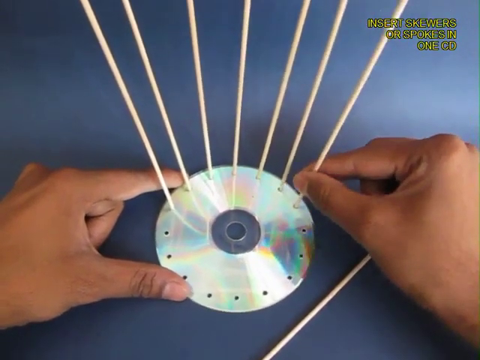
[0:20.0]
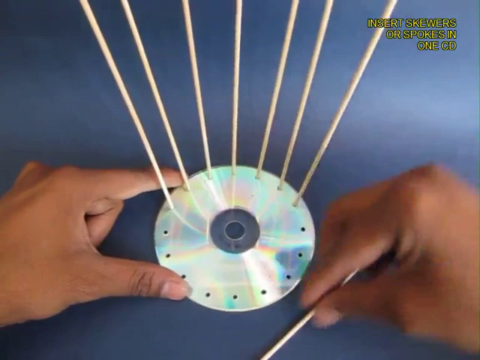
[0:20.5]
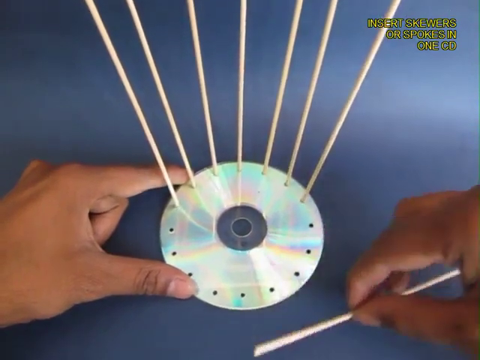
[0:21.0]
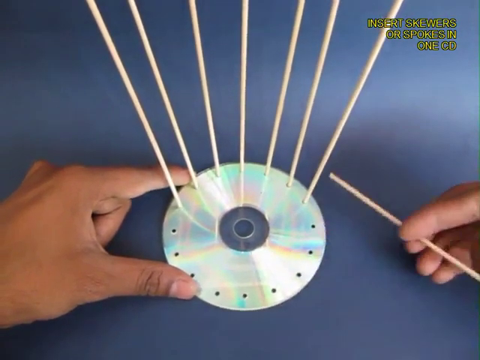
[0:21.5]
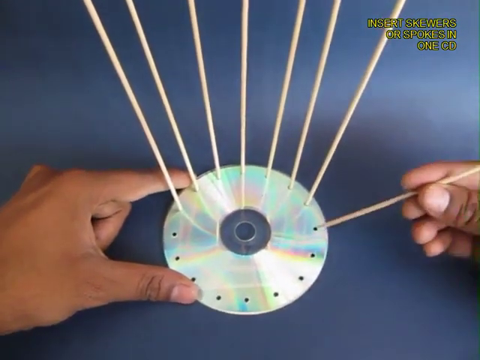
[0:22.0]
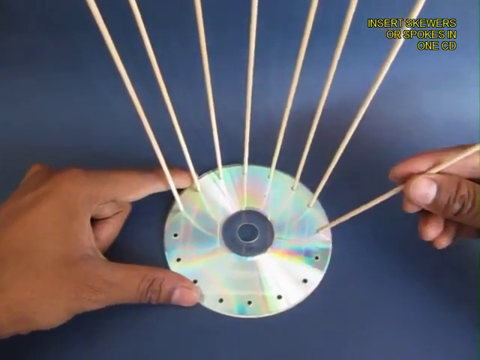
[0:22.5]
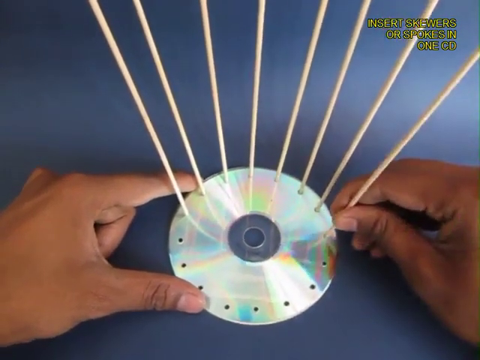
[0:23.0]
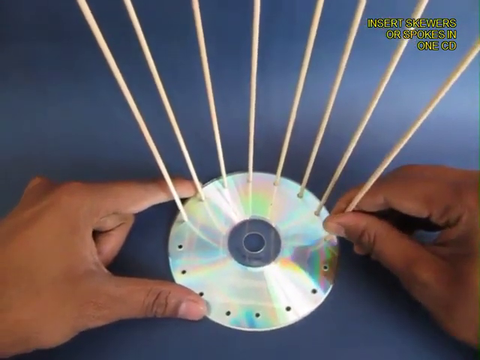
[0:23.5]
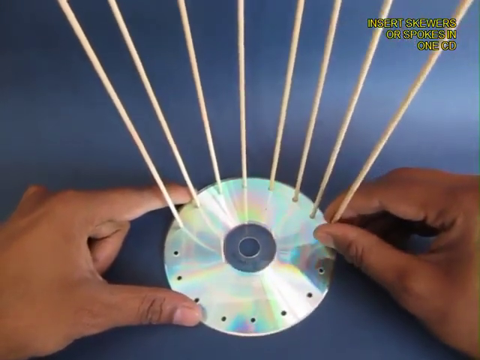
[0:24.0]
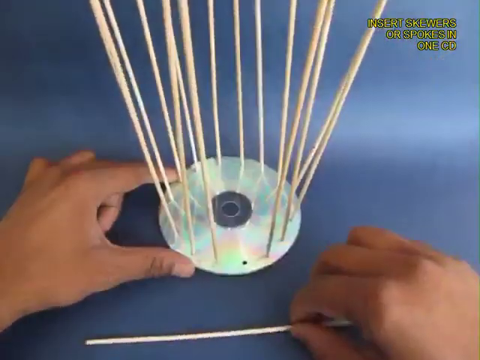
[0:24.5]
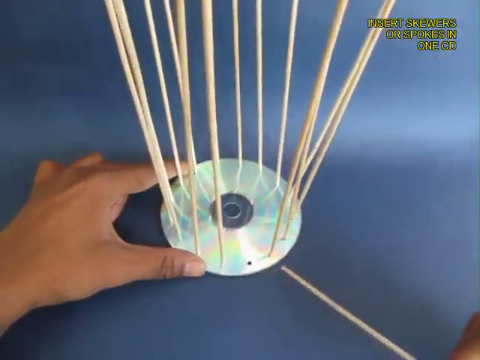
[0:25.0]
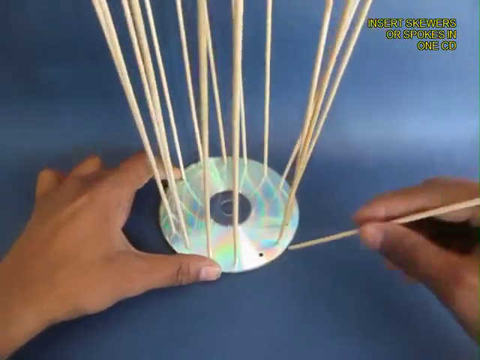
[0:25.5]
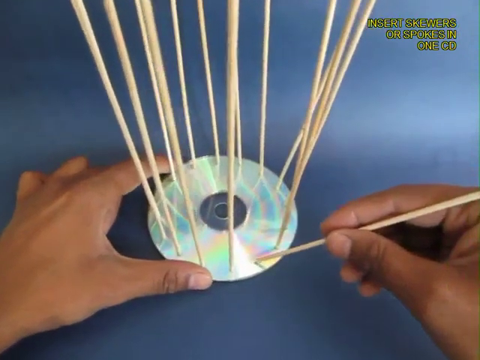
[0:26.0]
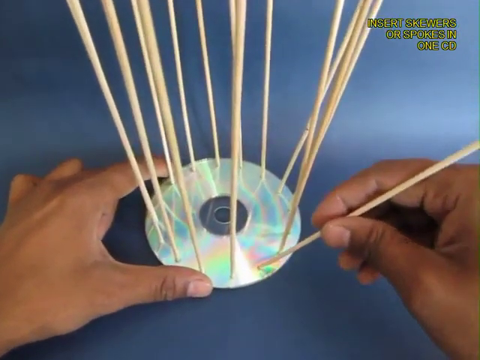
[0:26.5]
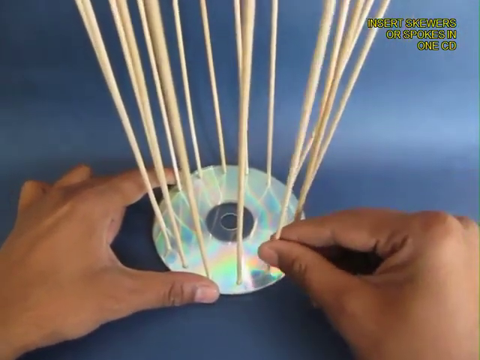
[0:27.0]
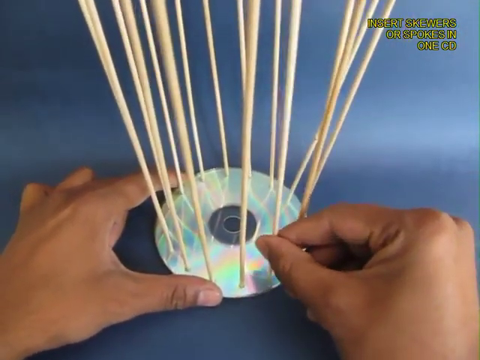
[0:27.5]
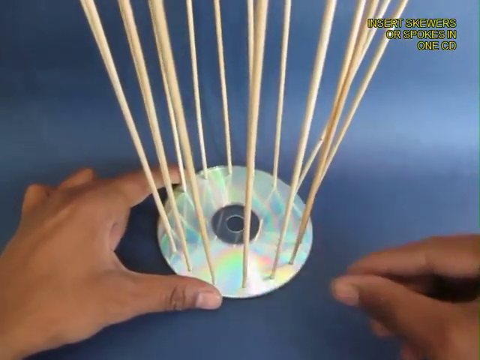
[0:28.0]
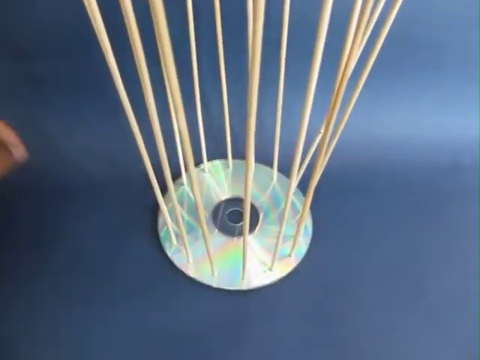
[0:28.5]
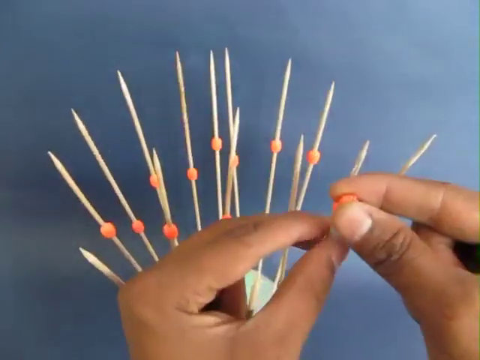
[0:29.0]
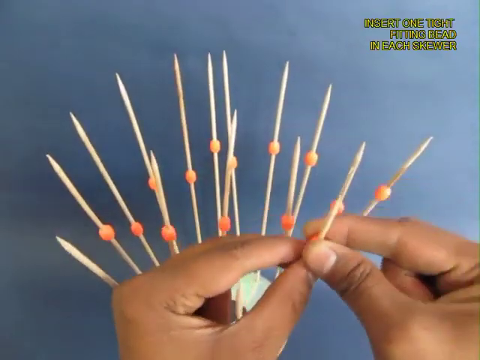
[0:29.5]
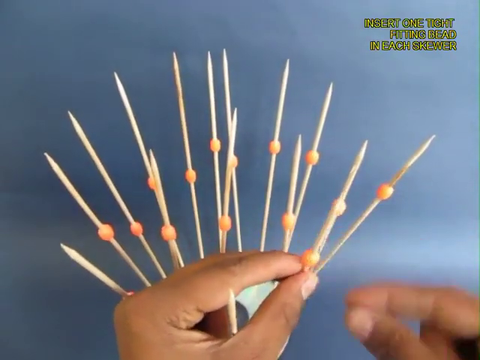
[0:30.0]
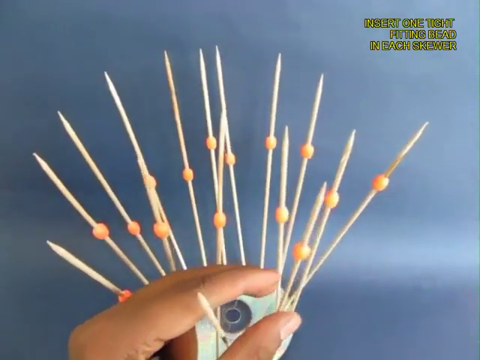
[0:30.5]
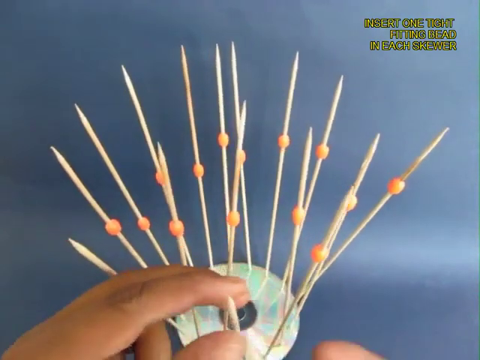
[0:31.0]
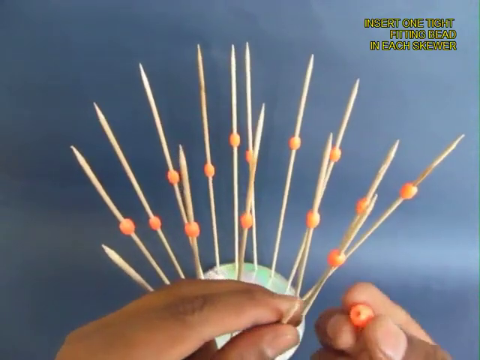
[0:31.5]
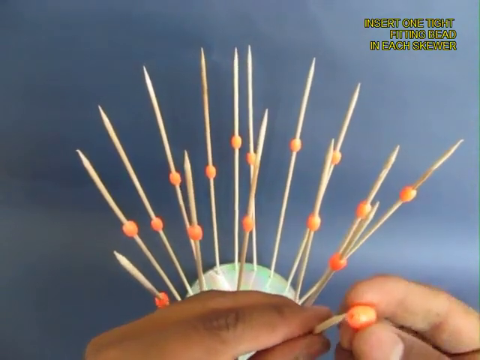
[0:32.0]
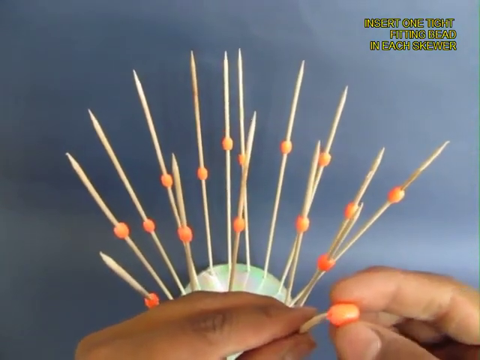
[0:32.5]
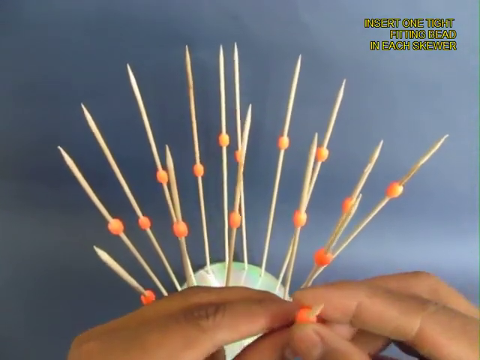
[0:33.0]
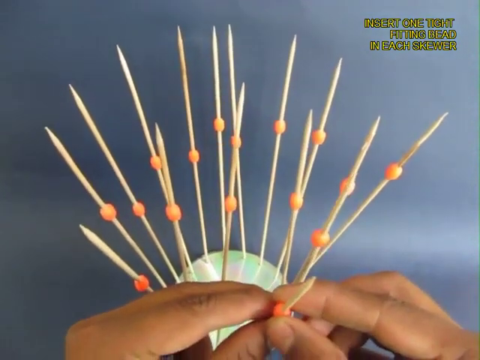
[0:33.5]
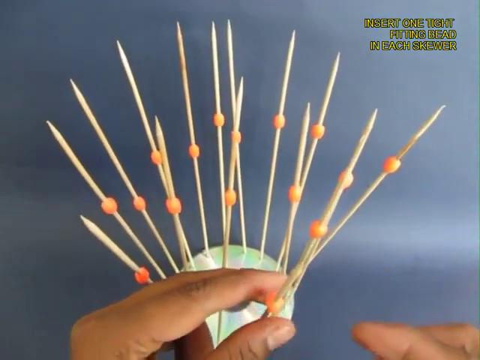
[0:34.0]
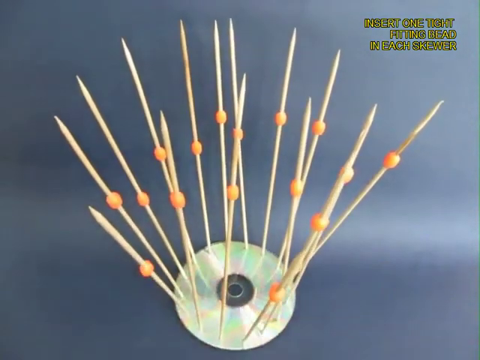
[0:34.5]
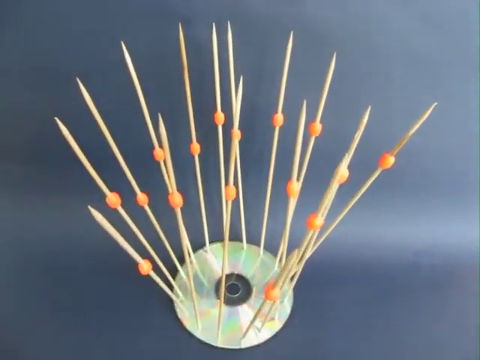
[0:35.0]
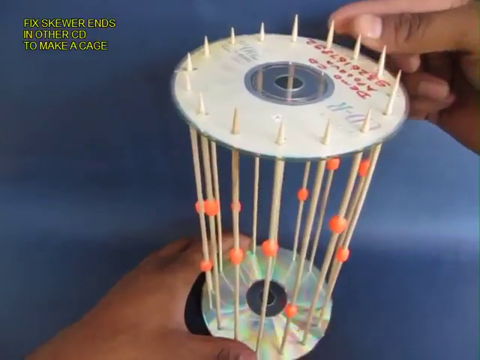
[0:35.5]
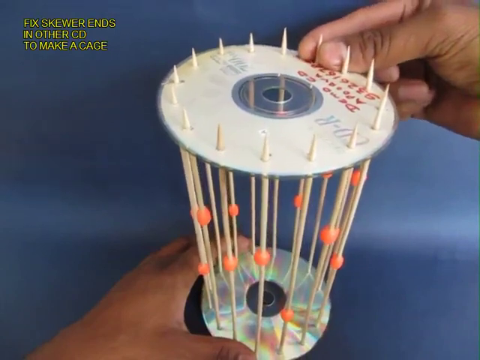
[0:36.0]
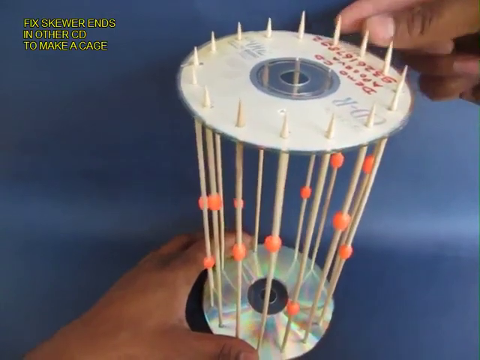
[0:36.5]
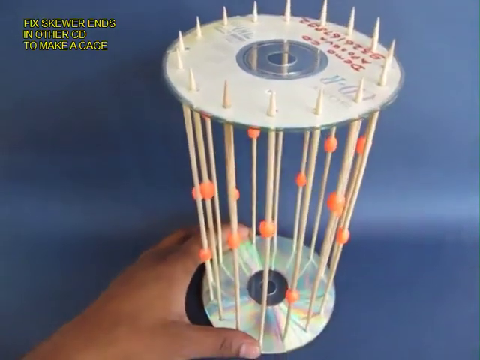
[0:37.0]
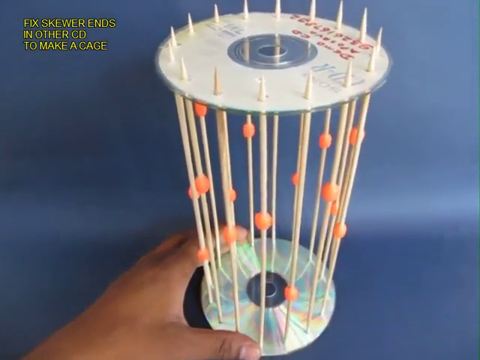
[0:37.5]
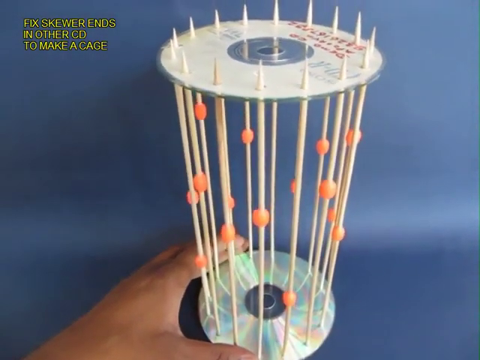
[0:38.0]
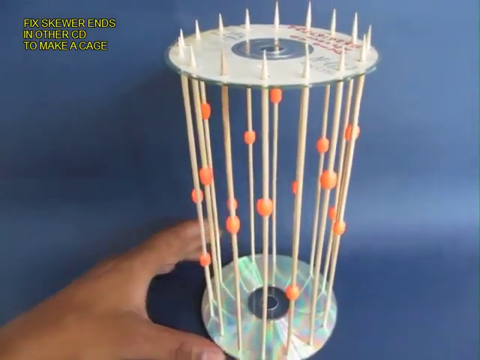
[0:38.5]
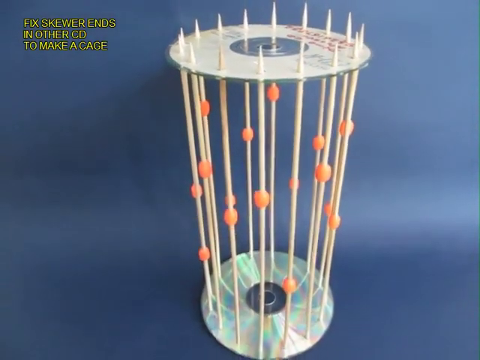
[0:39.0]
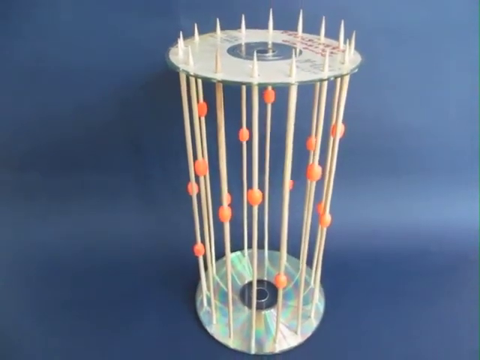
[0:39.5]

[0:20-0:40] On a blue background, two hands put the skewers into the holes on a CD. Directions in the upper right corner tell how to do this: insert the brown skewers into the CD until they all hang. The teacher puts little orange beads on the skewers, one bead per skewer, and then places the second CD on top of the skewers. It is held on just by the skewers and does not go all the way down, staying on top. The result is a cage-like shape in the form of a tube, all made by the teacher. The CDs are shiny and very reflective and have writing on them.